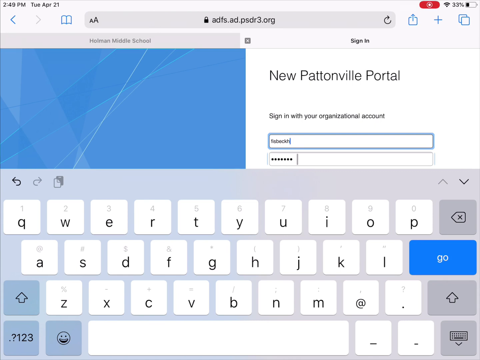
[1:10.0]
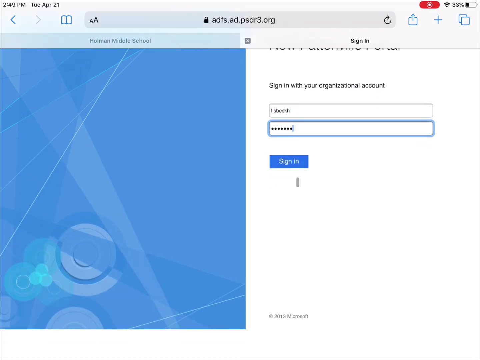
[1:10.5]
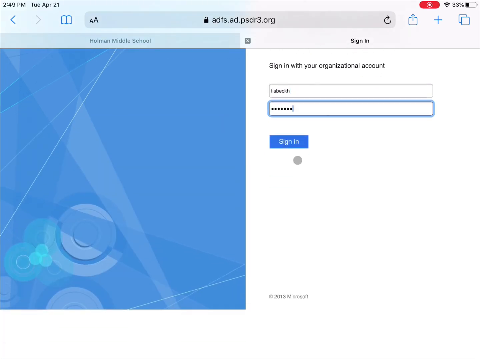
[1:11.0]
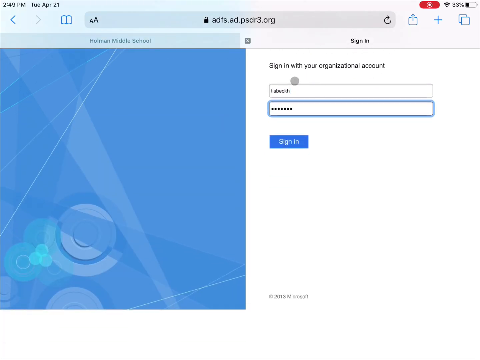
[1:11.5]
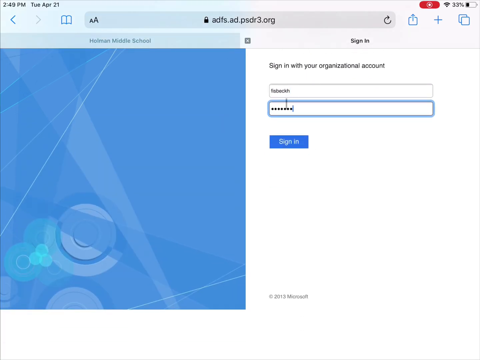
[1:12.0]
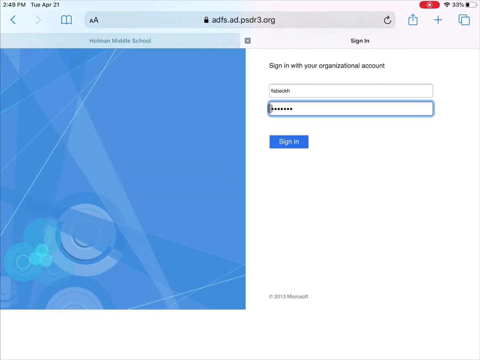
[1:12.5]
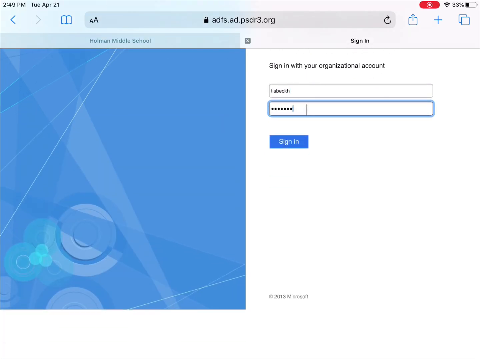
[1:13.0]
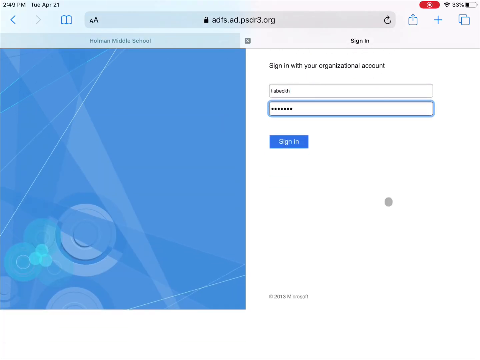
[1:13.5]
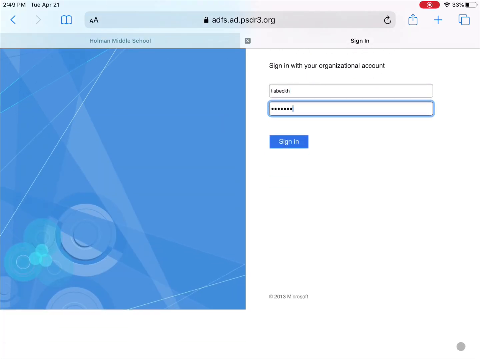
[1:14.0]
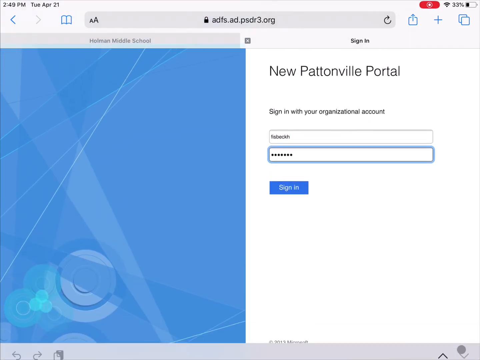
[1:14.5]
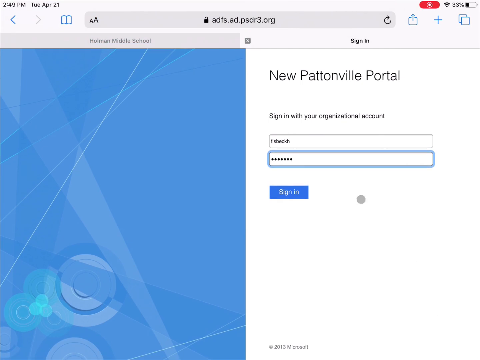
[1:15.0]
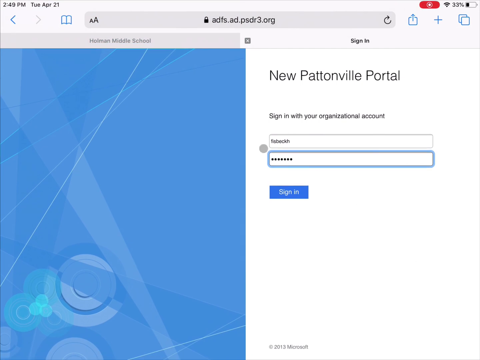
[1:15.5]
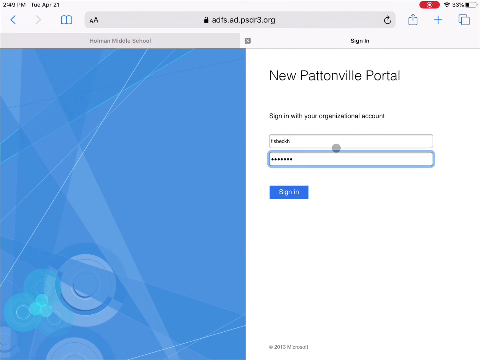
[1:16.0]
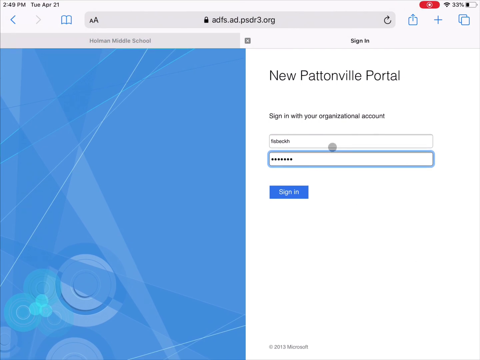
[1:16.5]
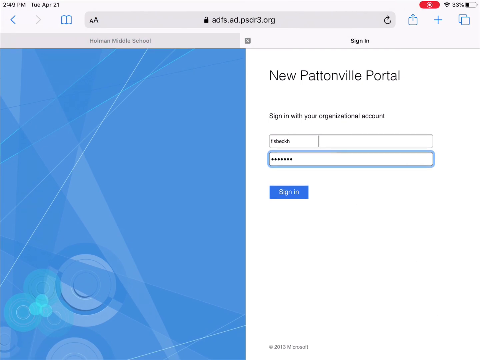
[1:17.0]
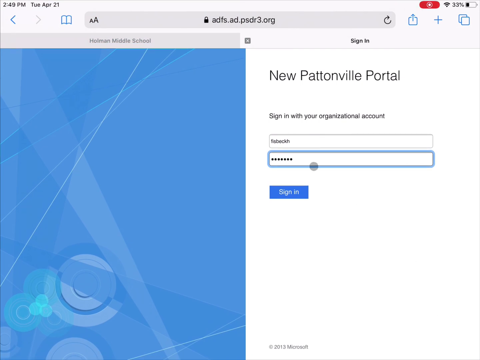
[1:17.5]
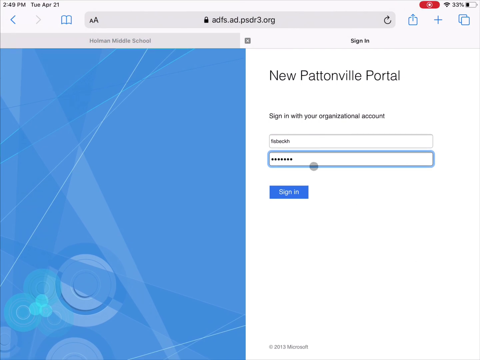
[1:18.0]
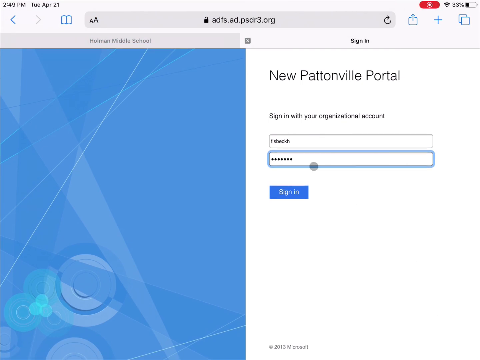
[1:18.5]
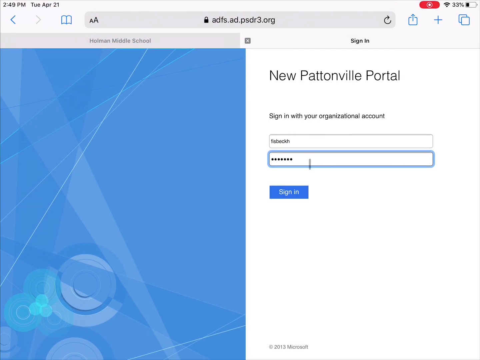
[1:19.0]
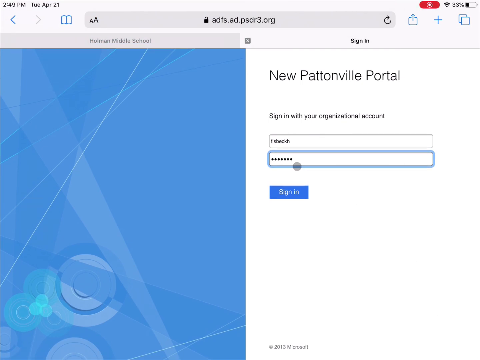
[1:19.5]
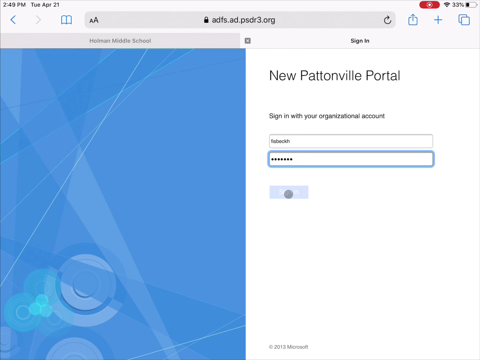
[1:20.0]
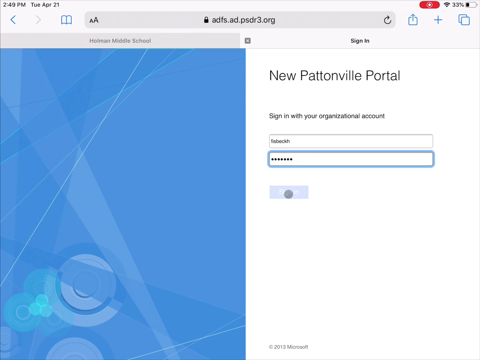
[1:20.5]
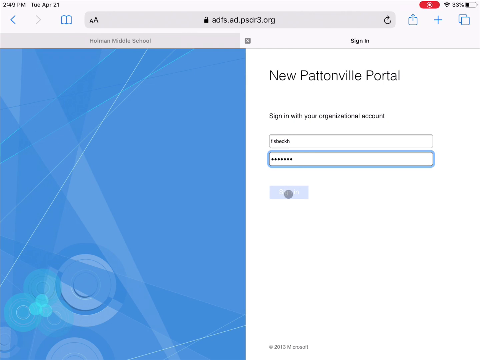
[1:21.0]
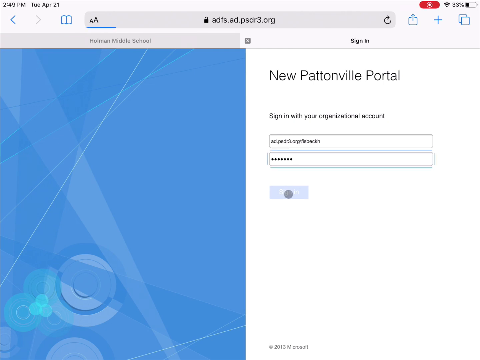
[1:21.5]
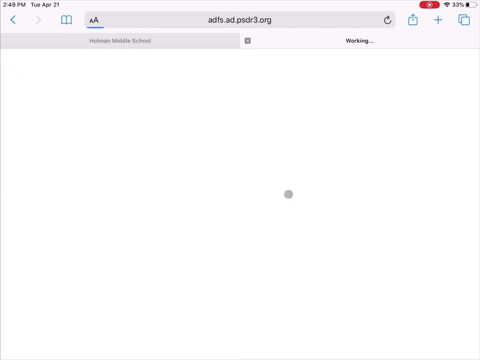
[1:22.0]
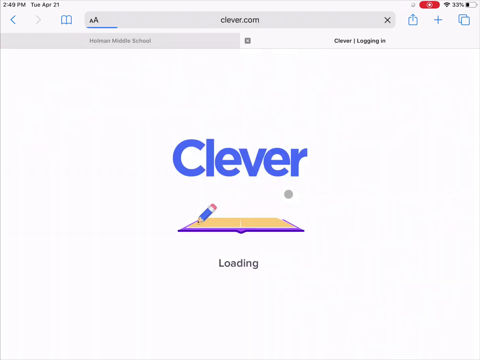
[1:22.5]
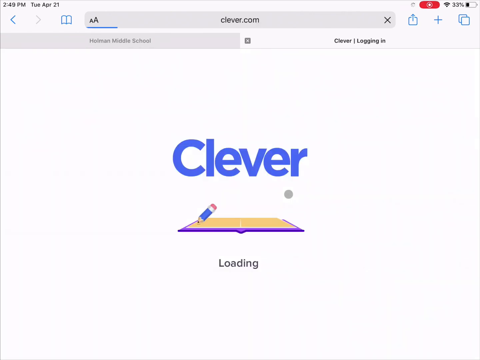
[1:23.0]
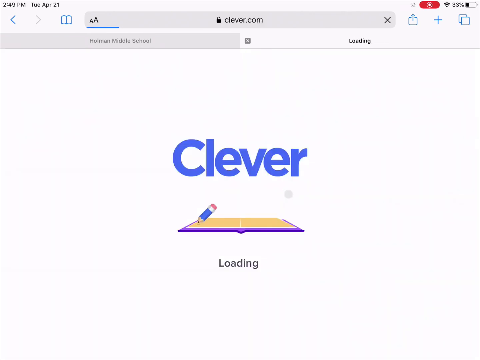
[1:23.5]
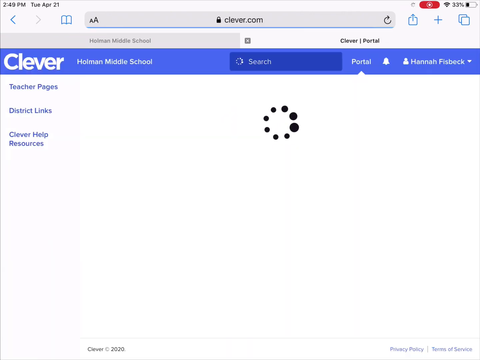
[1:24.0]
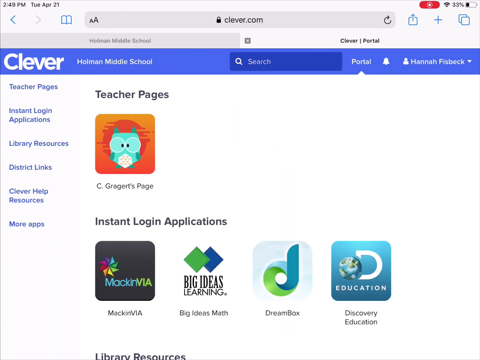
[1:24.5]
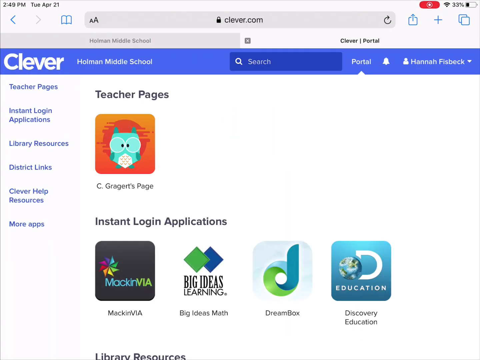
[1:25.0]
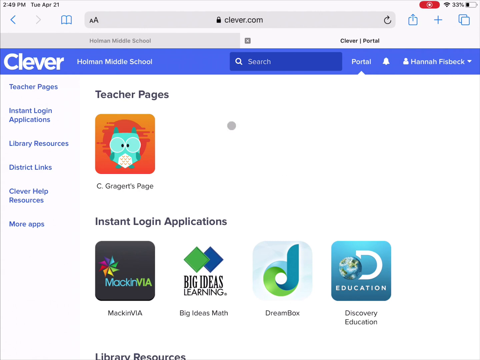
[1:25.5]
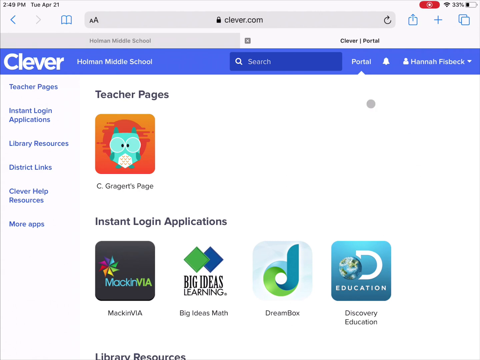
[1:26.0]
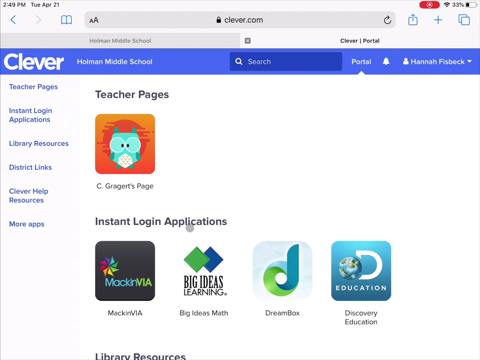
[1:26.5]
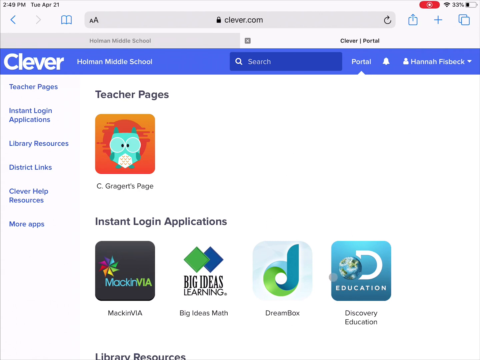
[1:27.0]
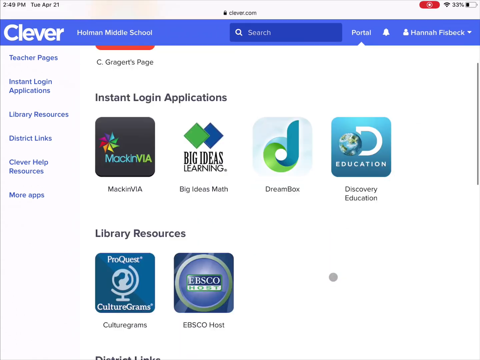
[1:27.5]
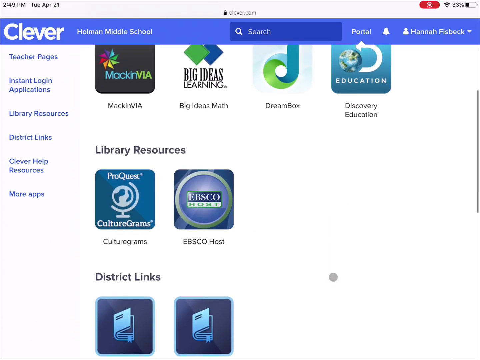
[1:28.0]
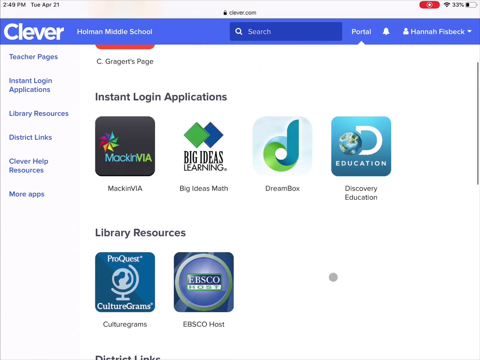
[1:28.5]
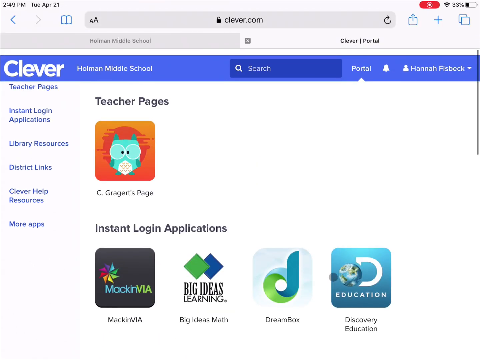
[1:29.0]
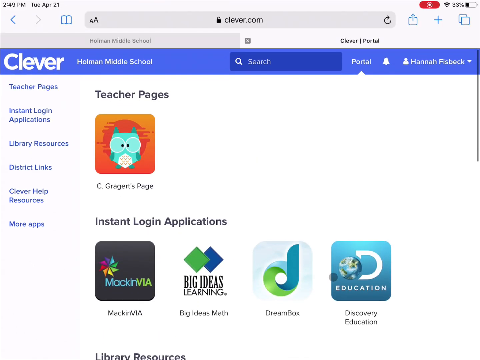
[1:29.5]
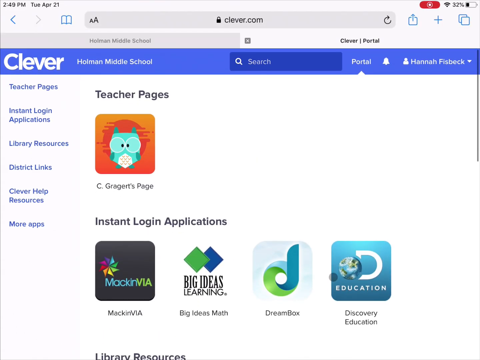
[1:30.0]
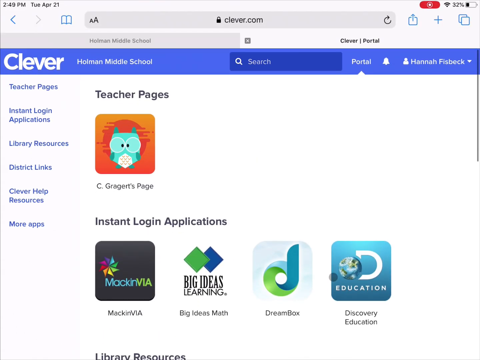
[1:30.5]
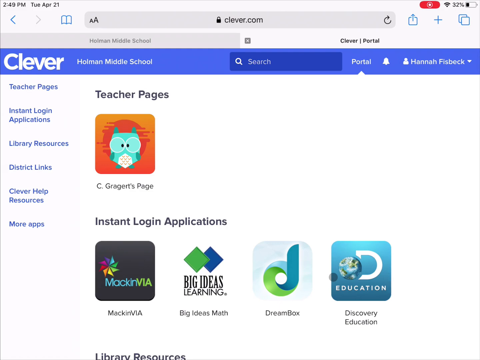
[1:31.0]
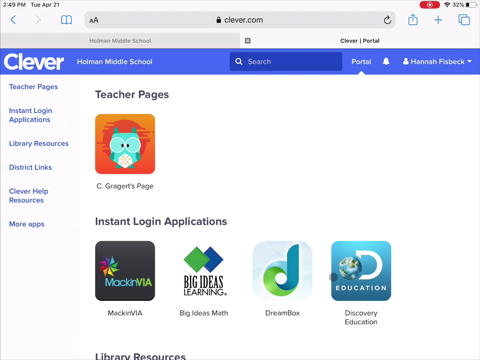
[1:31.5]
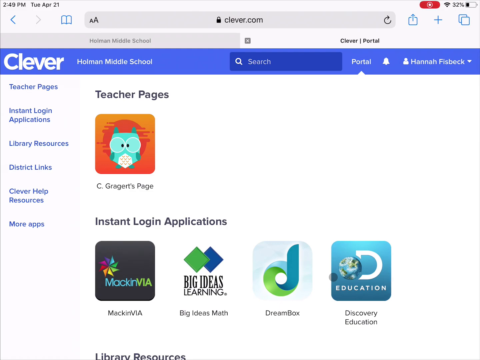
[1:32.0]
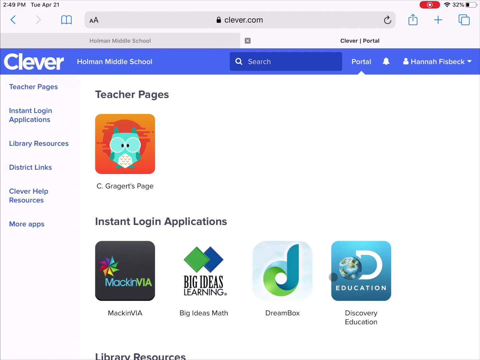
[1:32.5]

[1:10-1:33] On the MacBook, the person goes to Safari and types clever.com. A new portal view pops up asking for a username and password. The person recording types in a username and password and signs in, and the Clever app opens, showing the Homer Middle School portal with a graduates page and other school-related items popping up.